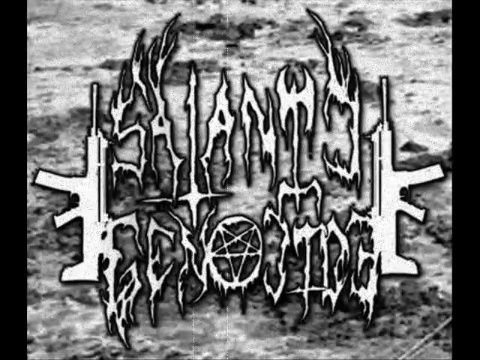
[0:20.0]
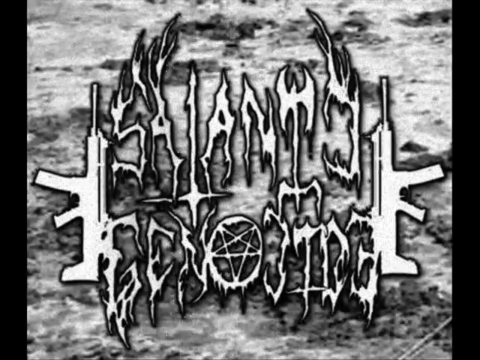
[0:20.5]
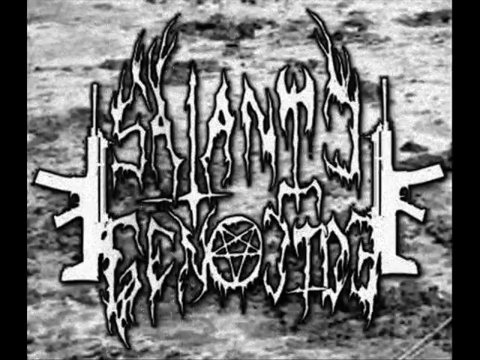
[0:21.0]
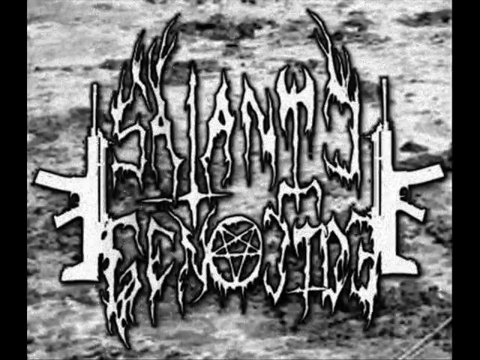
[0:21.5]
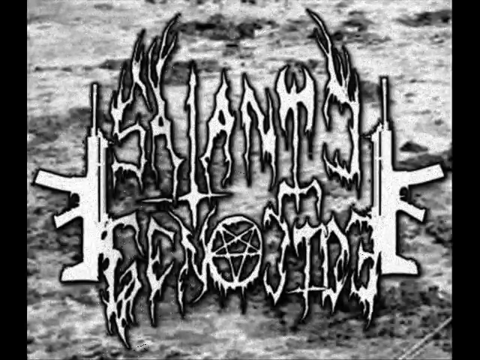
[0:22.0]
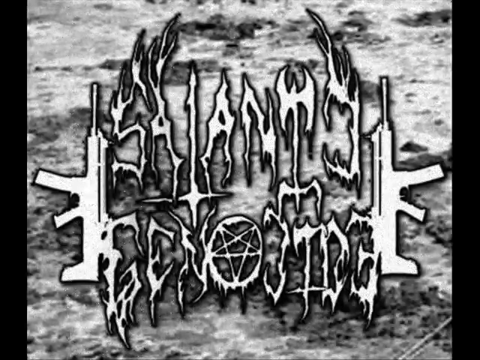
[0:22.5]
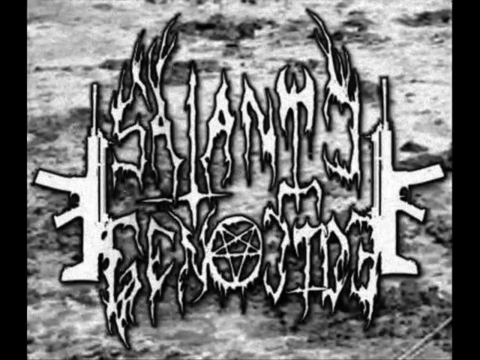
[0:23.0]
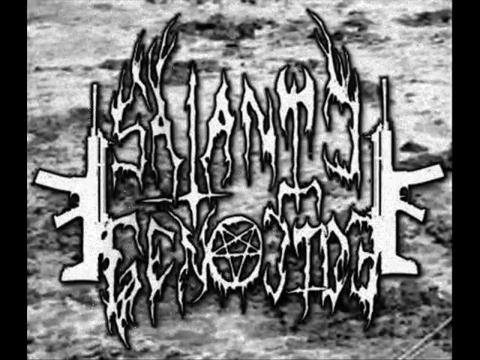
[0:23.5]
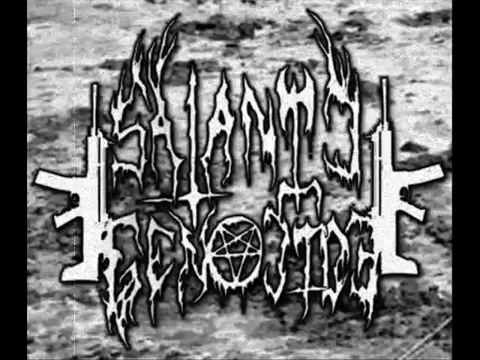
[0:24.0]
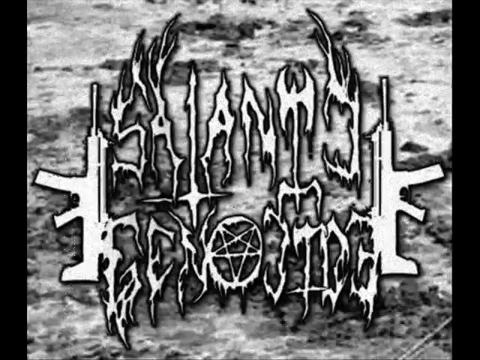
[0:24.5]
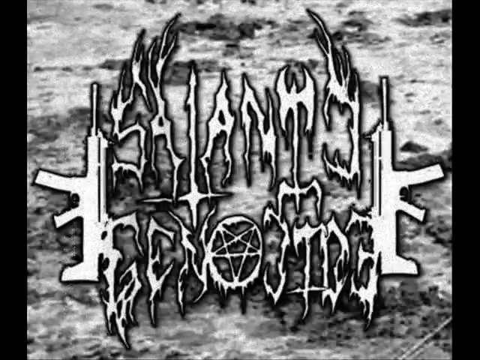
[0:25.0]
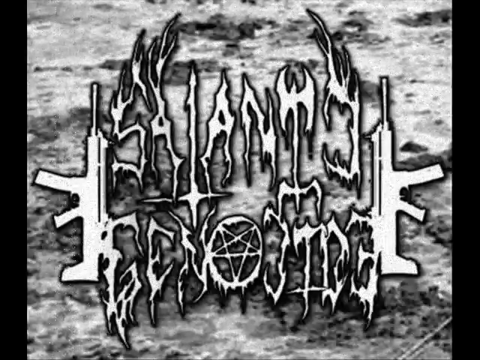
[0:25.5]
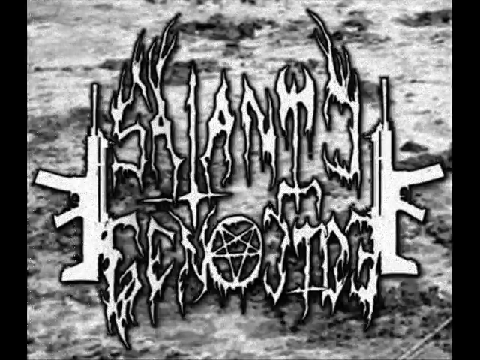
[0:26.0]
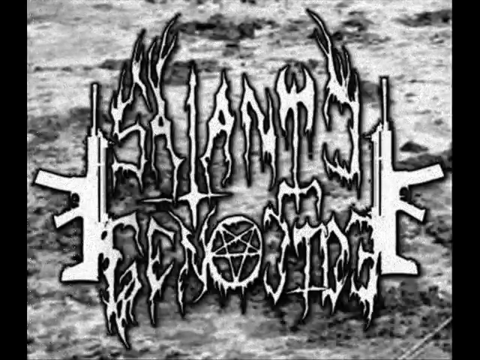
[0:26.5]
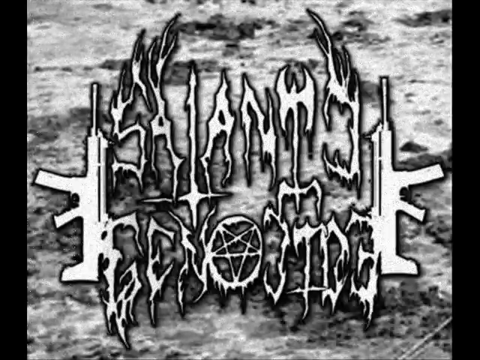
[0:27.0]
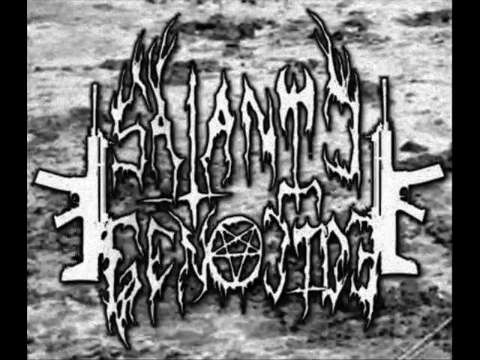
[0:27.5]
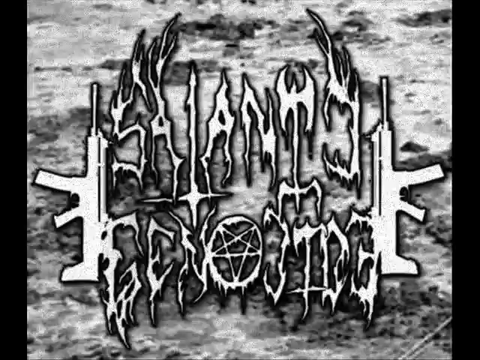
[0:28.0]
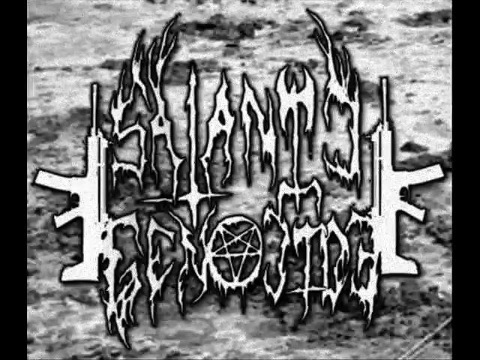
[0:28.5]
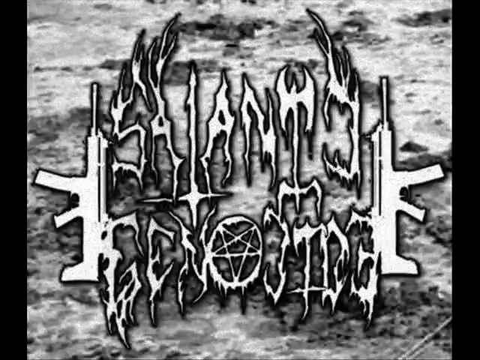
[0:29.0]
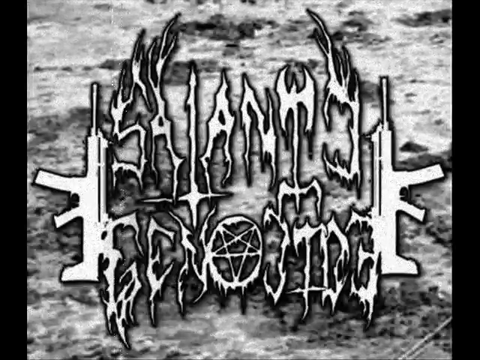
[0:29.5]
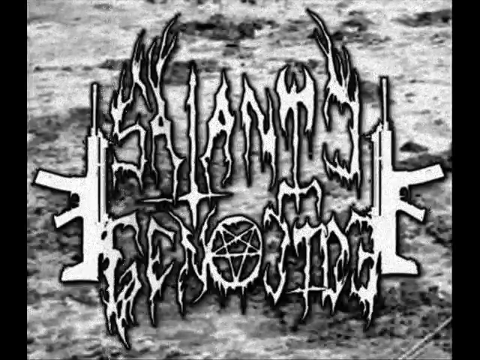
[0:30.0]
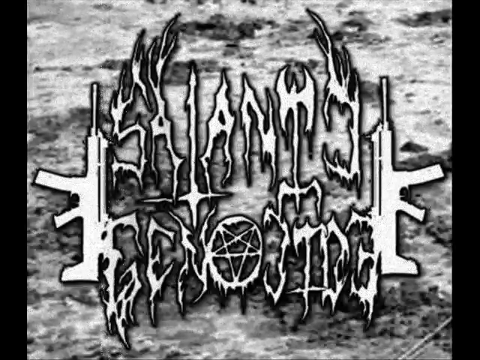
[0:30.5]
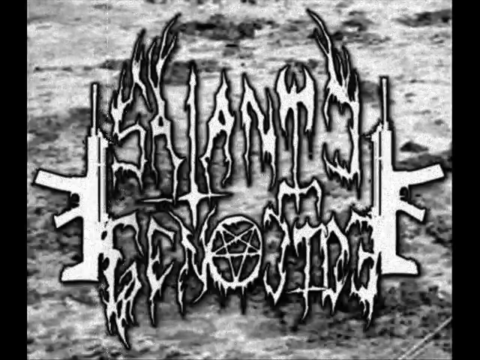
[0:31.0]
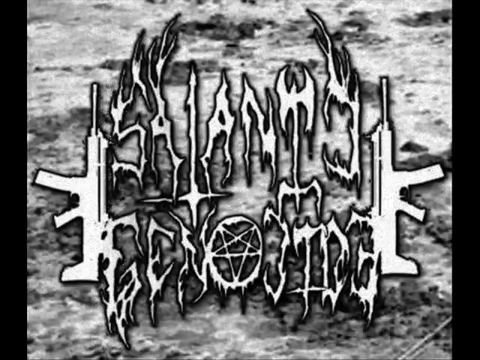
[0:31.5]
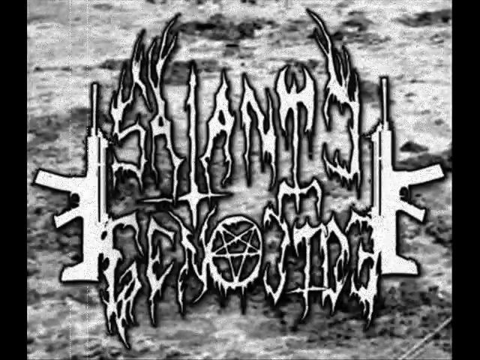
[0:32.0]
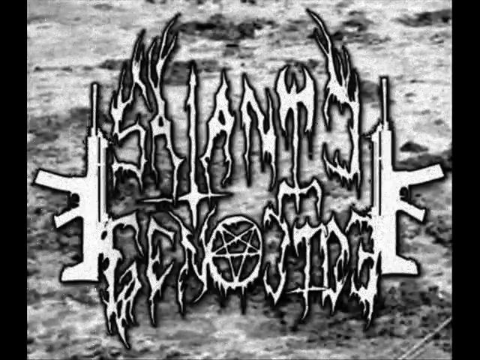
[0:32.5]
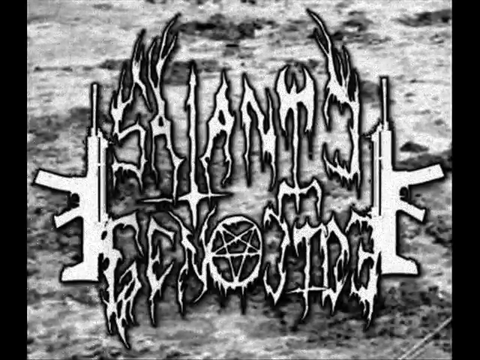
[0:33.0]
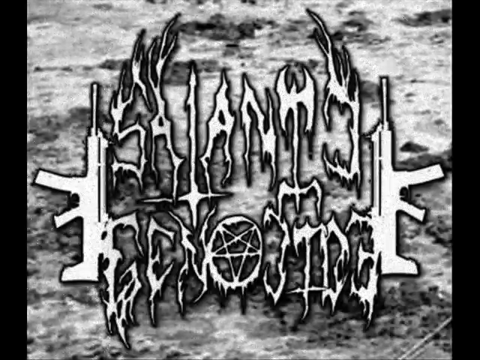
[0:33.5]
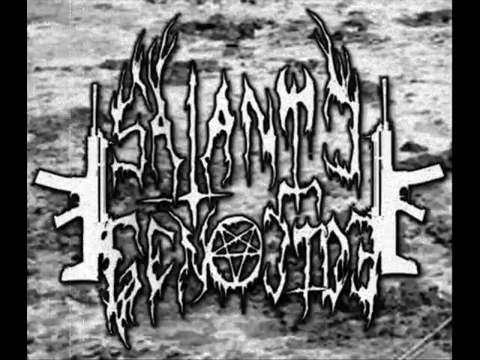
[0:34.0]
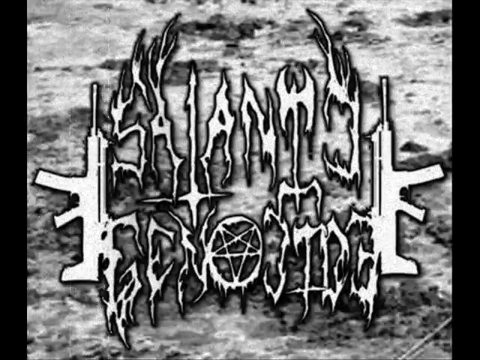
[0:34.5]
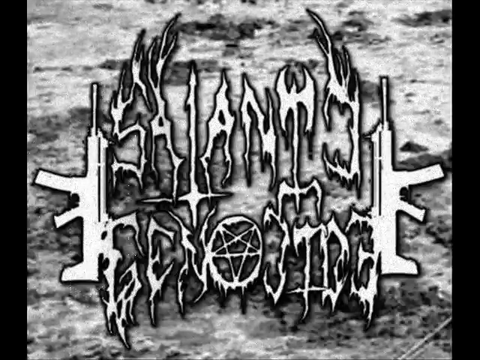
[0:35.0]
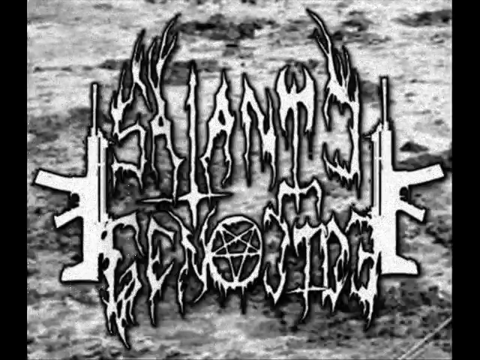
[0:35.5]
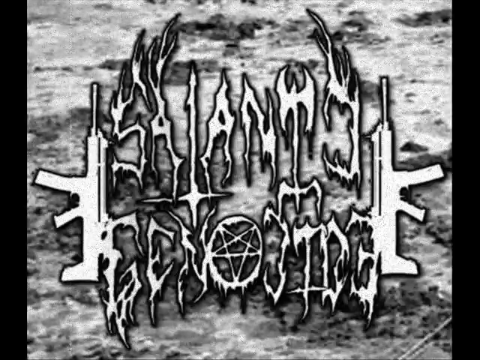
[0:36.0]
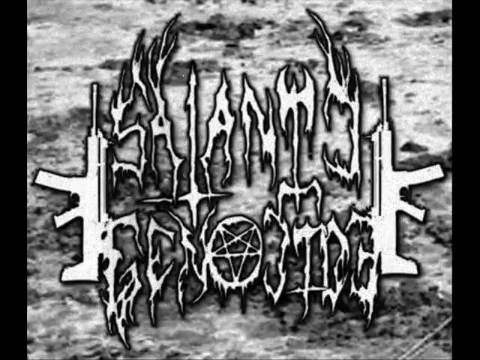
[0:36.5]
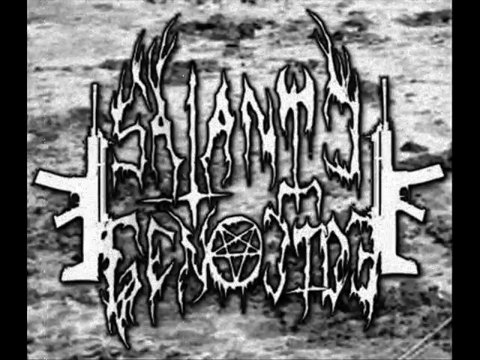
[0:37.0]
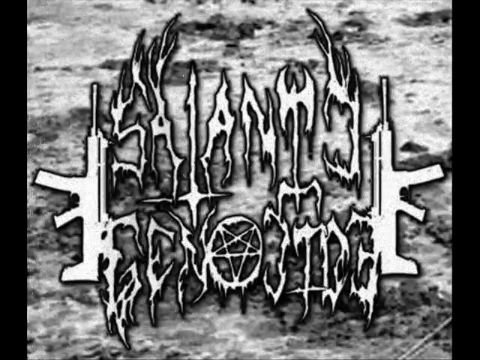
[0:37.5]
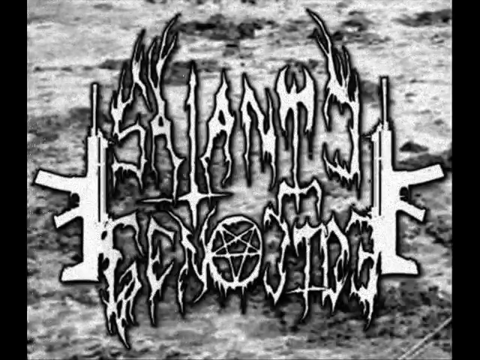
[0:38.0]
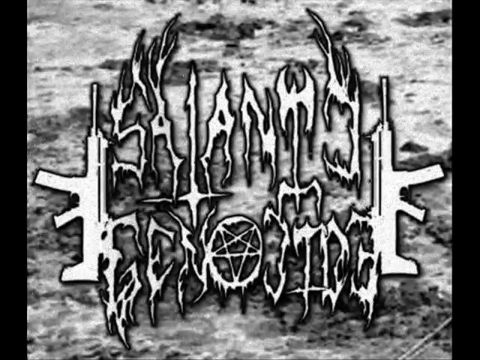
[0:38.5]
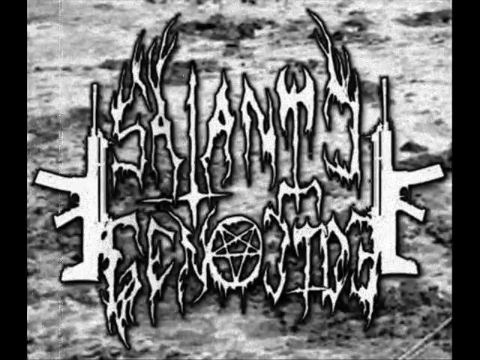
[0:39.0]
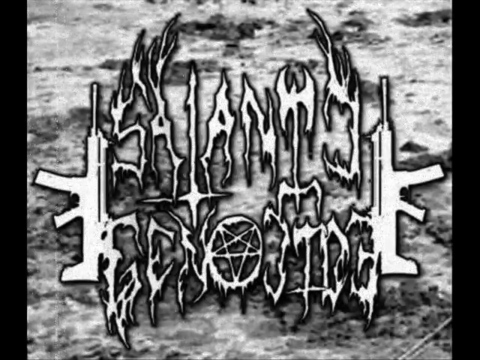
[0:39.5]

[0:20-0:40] No person appears. The grayscale background with the writing "Satanic Genocide" remains on screen. The lettering of "Satanic" seems rigid, like slime or something scratched into it. The pentagram is there, and the two rifles are on the side.